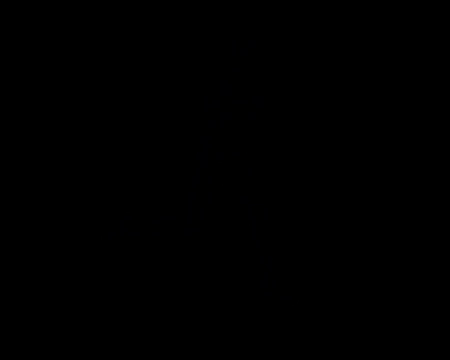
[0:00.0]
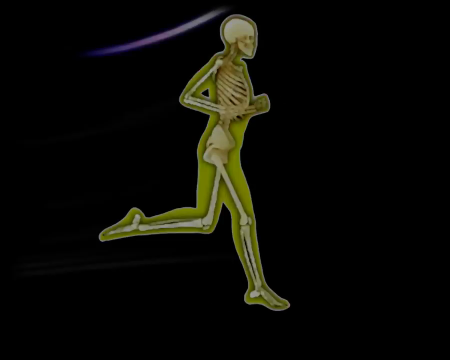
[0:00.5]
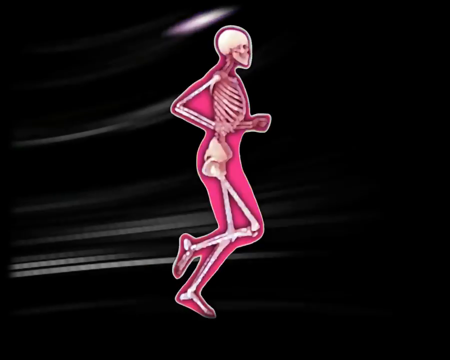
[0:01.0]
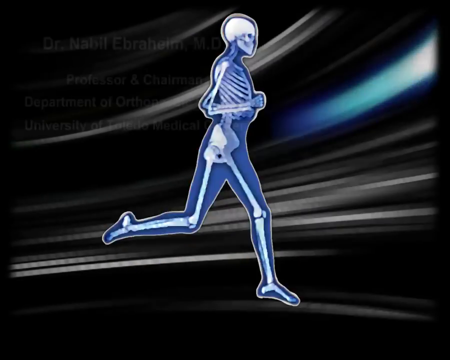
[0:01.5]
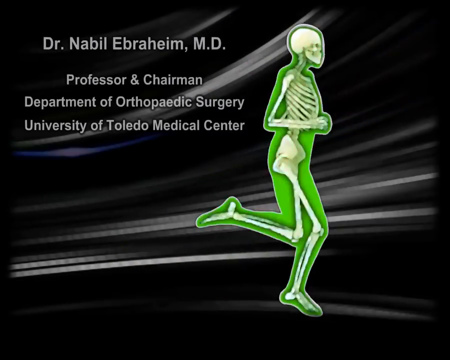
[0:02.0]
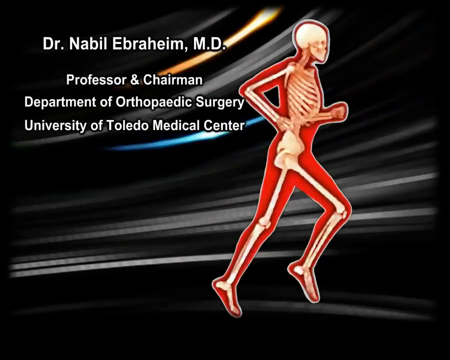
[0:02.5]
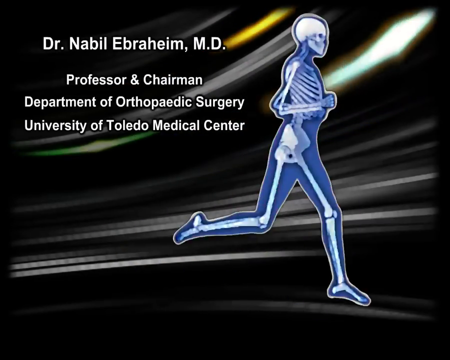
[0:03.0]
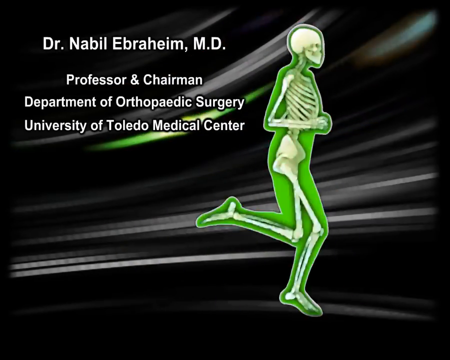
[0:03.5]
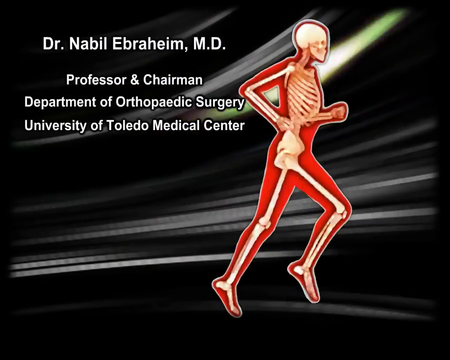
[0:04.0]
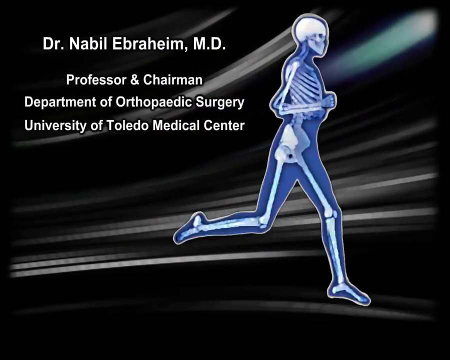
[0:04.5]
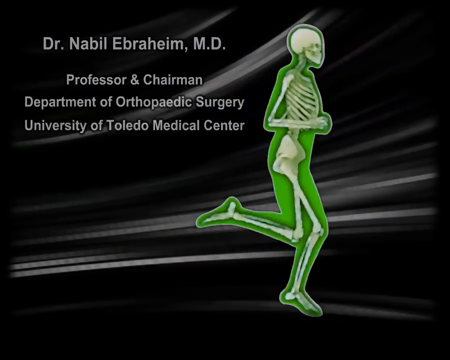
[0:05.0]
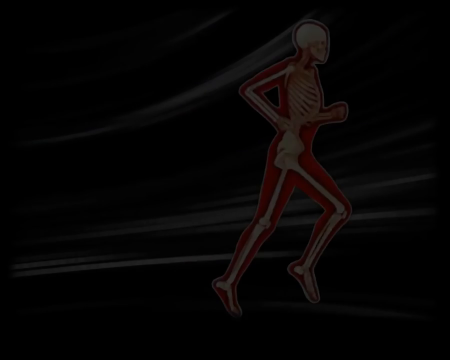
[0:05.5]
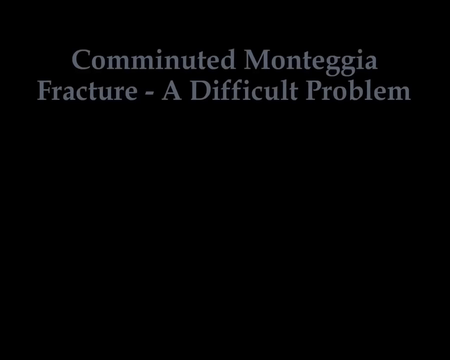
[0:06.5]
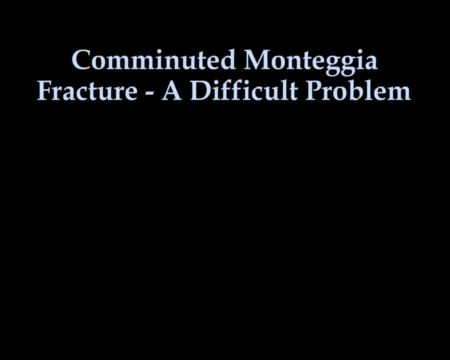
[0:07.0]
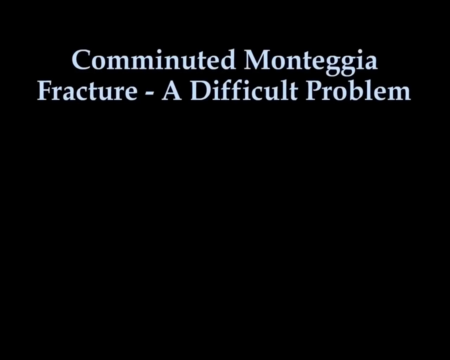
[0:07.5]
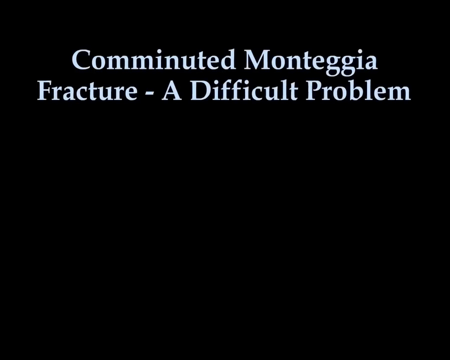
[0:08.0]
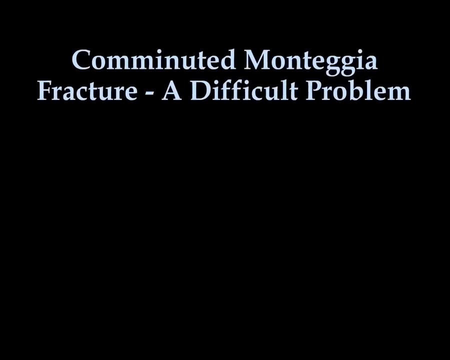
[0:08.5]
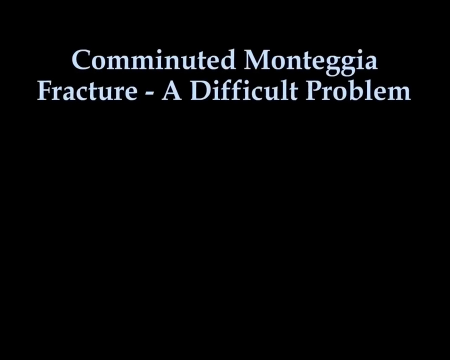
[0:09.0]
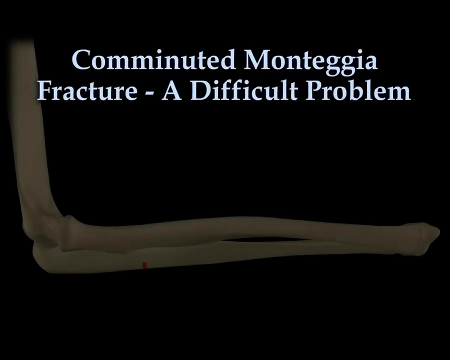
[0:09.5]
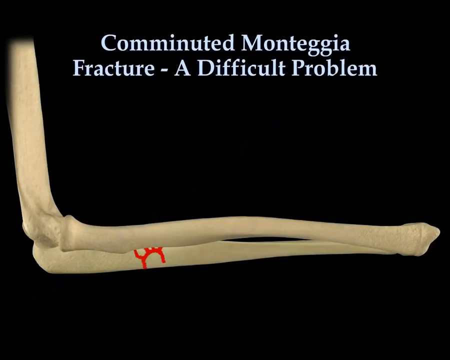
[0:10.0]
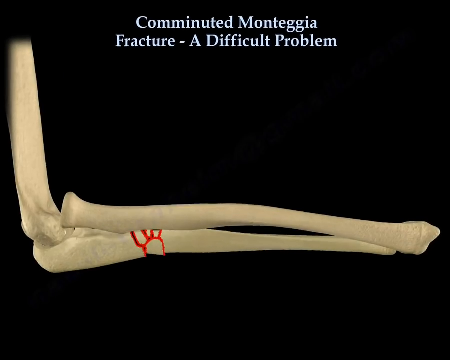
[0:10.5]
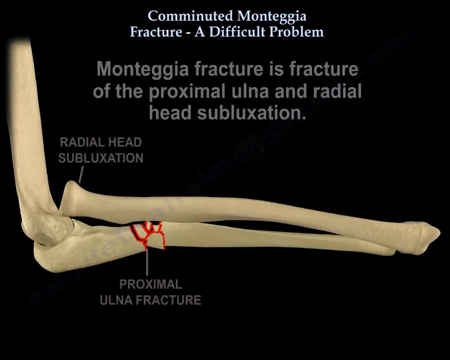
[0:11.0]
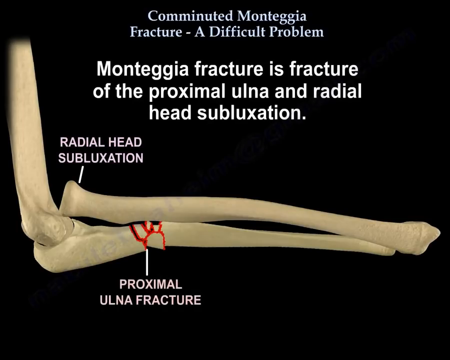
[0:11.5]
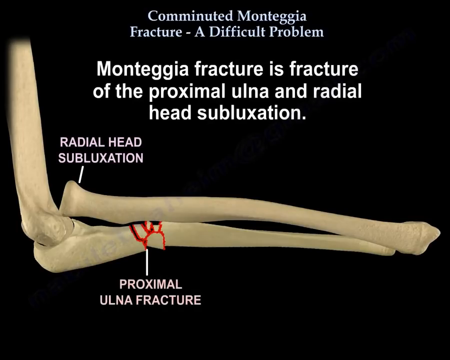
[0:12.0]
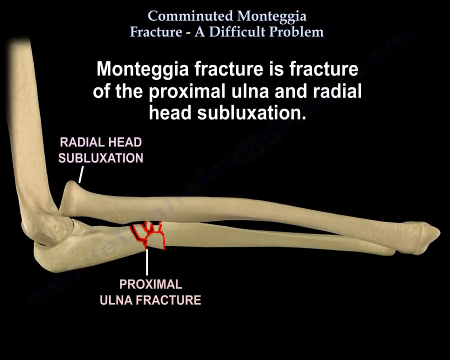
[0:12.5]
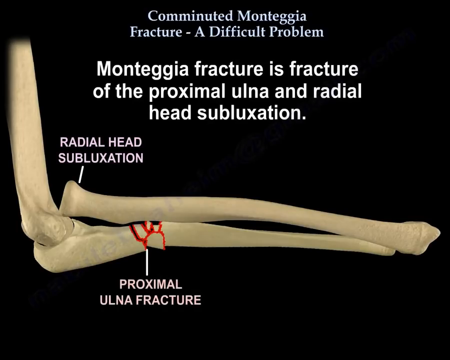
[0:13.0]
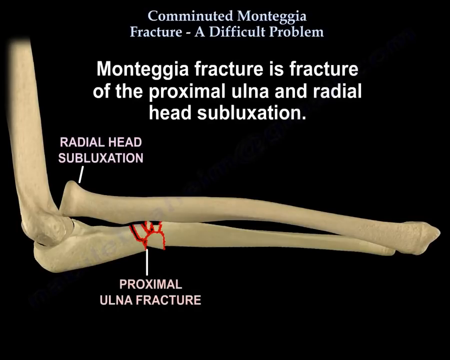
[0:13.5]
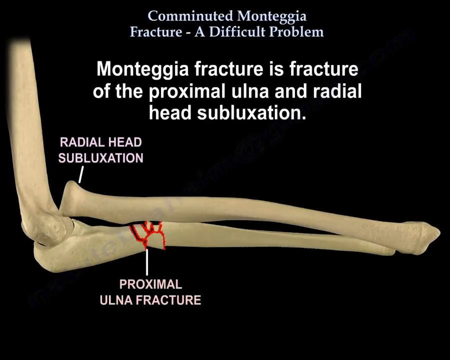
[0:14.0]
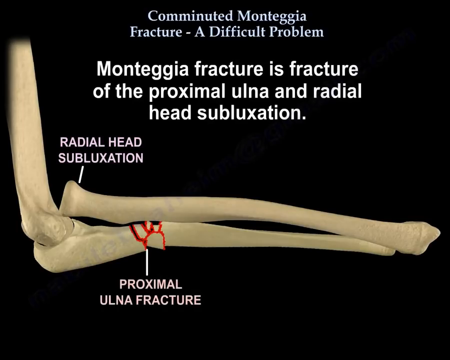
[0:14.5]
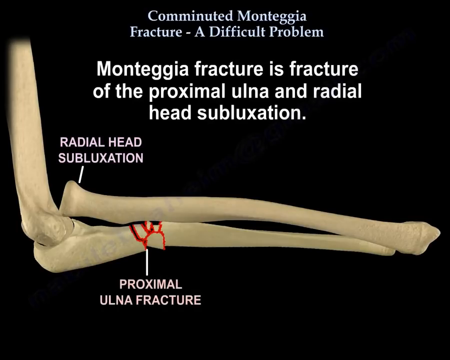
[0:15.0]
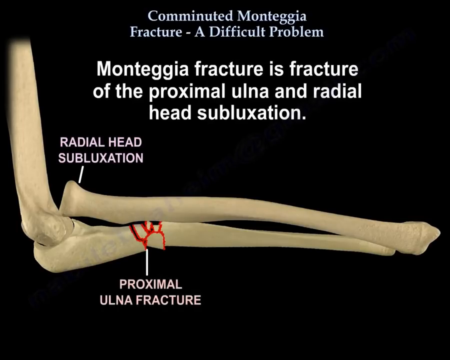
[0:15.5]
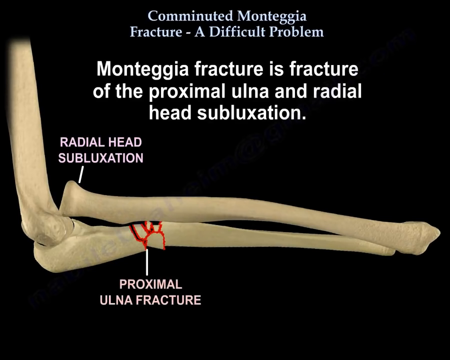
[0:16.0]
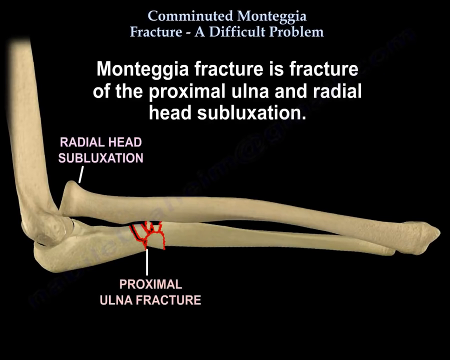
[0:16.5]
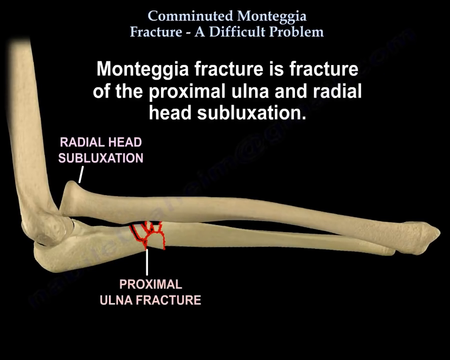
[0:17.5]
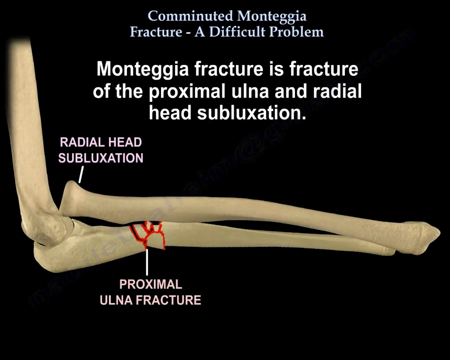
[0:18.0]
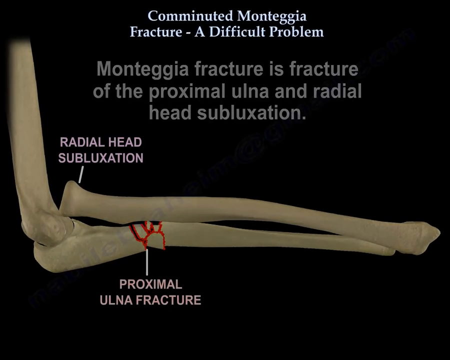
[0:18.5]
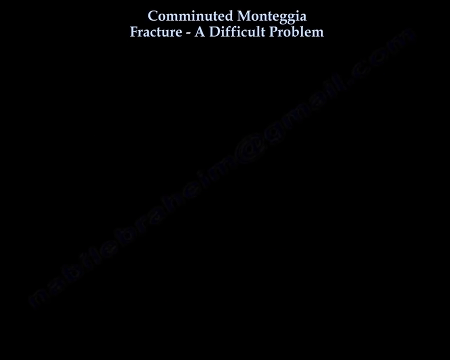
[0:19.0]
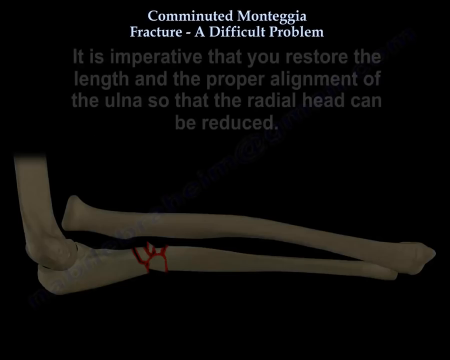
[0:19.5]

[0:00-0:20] The video opens with a side-on graphic of a skeletal figure with white bones and a red border to the body, apparently running from left to right across the screen. To his left, white text on a black background with some white lines reads "Dr Nabil Ebrahim MD", with his details below: "professor and chairman", then "department of orthopedic surgery", then "University of Toledo Medical Center". As the graphic plays, the border of the skeletal figure changes between red and green, and at times the border and background to the figure are blue. The figure starts at the centre of the screen and then moves slightly to the right, as if he has moved fractionally as he runs. The scene then changes to a black screen with the heading "Comminuted Monteggia fracture - a difficult problem" at the top. Below it, a graphic of a bent bone appears; it is an arm, showing an ulna fracture.